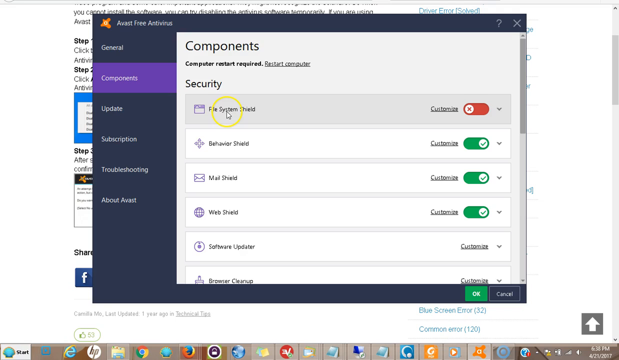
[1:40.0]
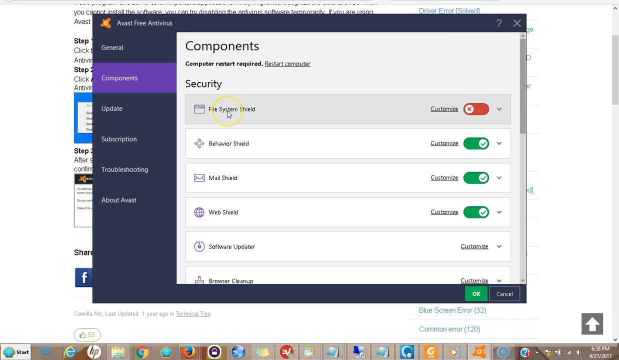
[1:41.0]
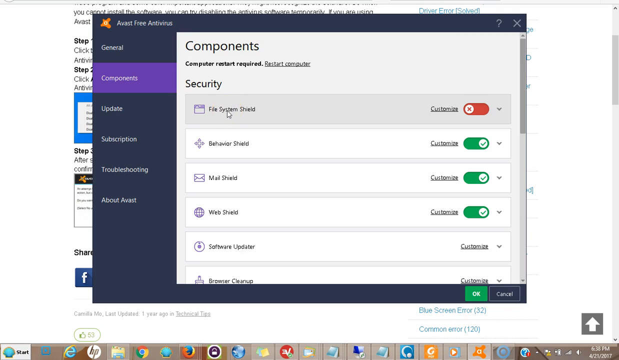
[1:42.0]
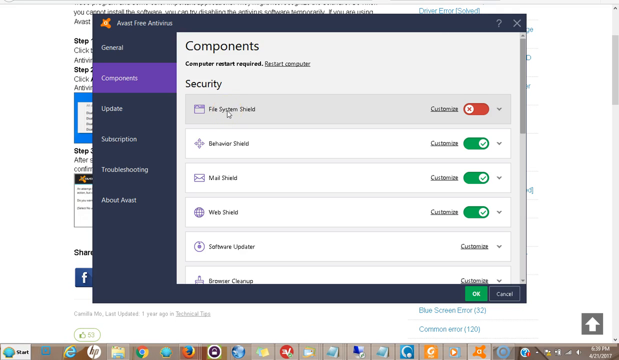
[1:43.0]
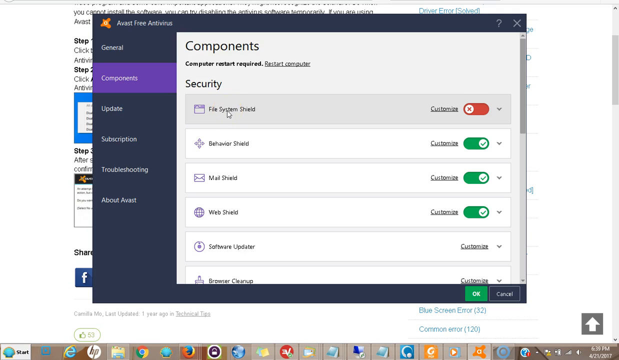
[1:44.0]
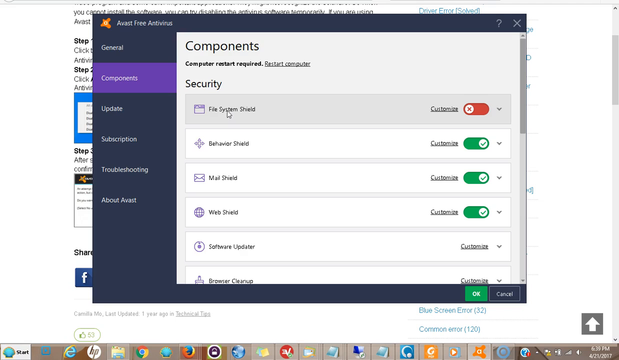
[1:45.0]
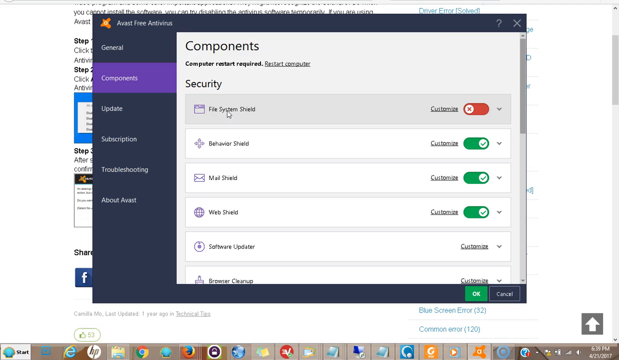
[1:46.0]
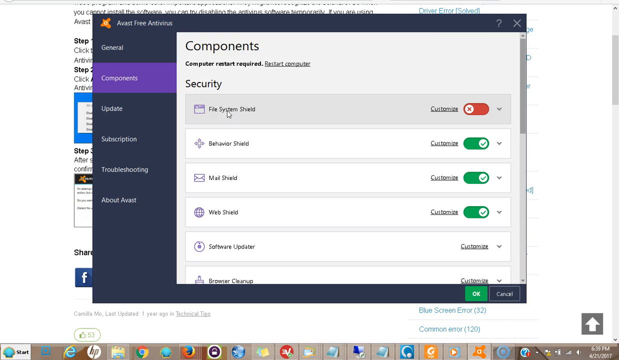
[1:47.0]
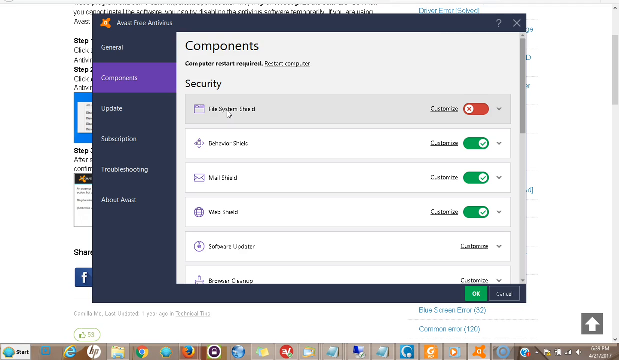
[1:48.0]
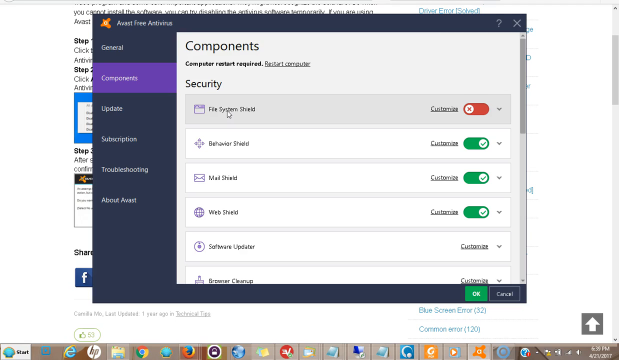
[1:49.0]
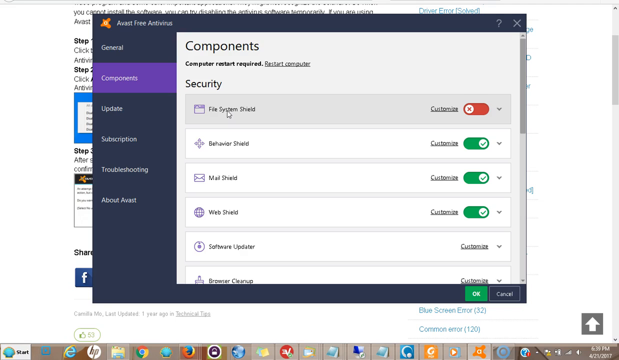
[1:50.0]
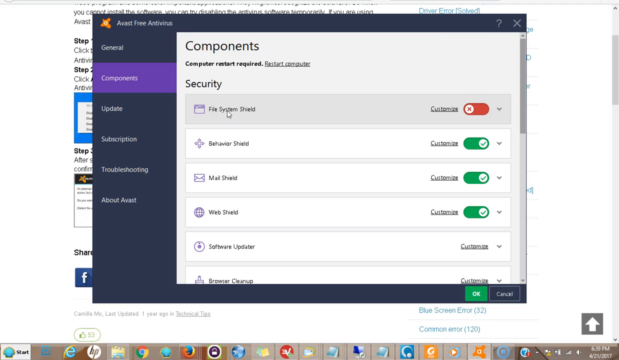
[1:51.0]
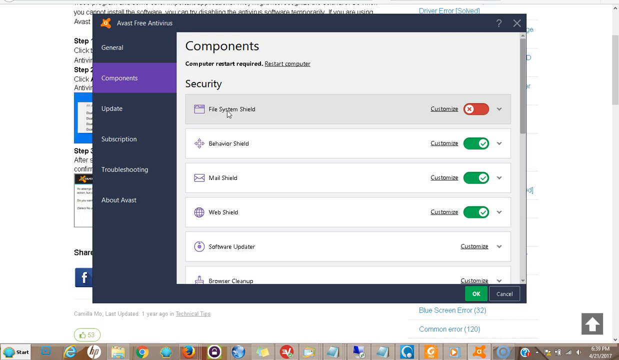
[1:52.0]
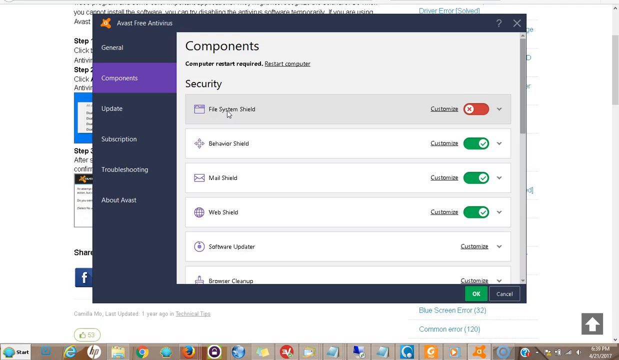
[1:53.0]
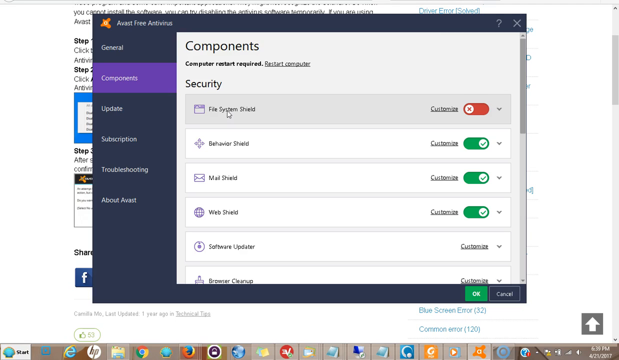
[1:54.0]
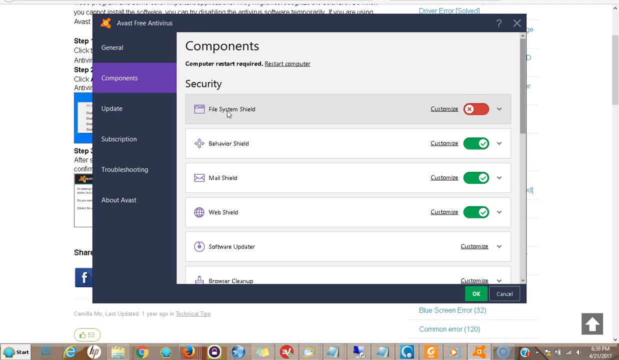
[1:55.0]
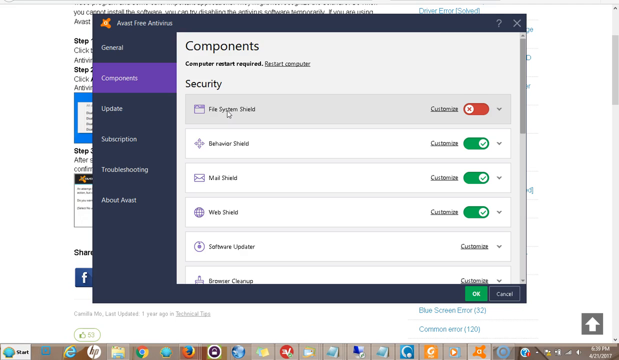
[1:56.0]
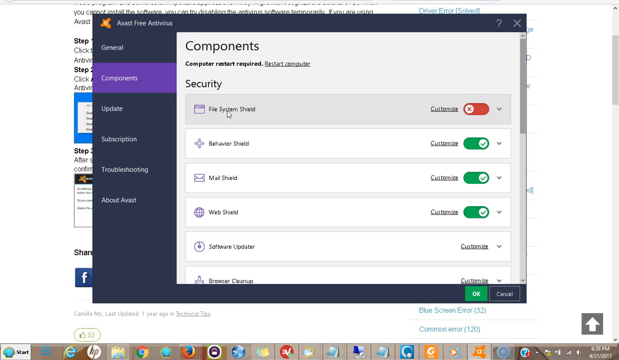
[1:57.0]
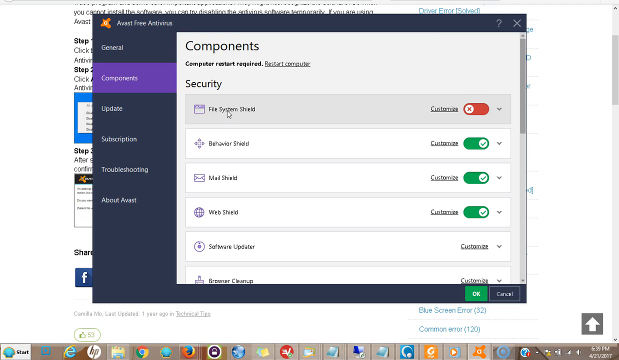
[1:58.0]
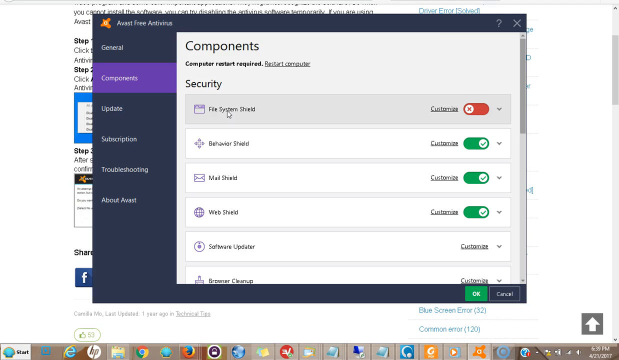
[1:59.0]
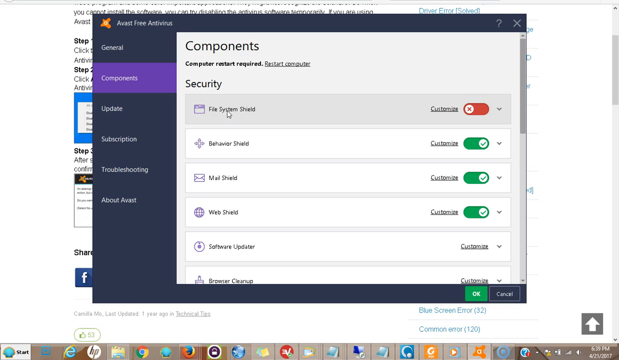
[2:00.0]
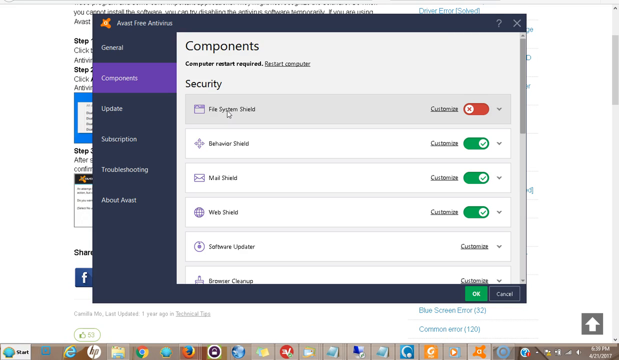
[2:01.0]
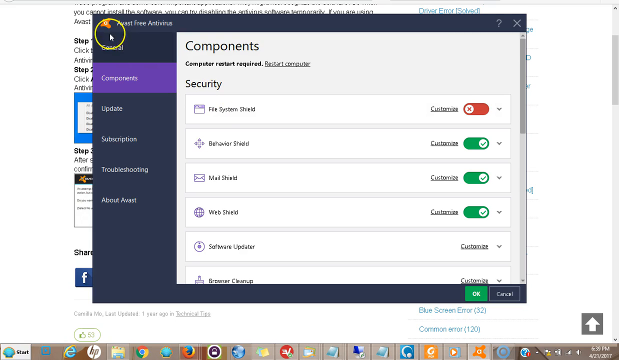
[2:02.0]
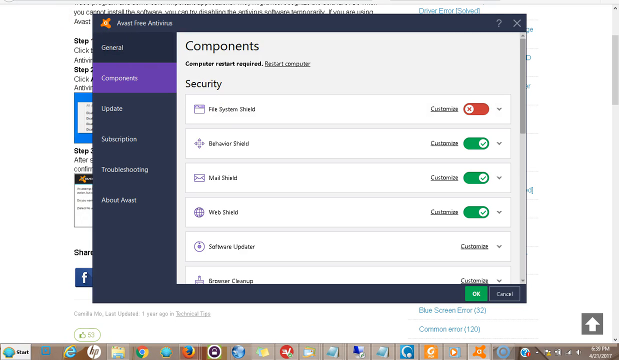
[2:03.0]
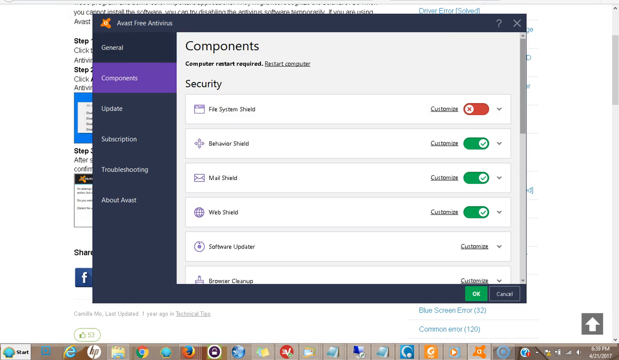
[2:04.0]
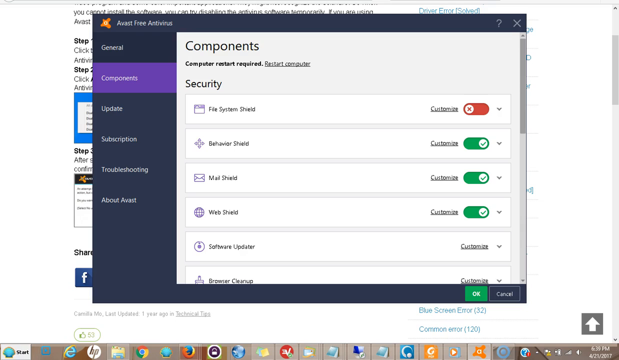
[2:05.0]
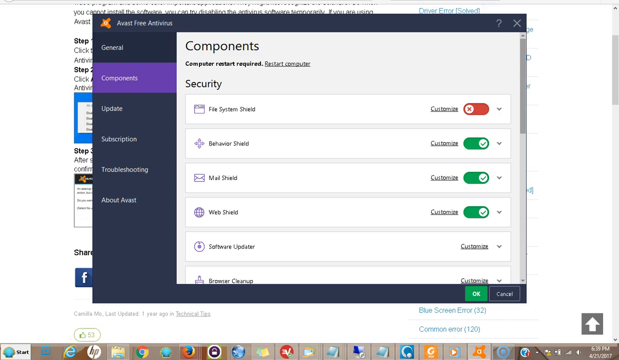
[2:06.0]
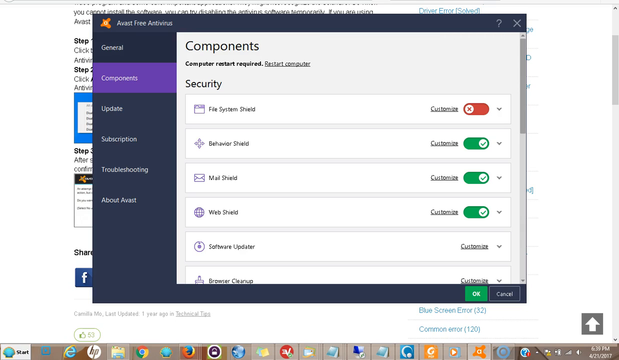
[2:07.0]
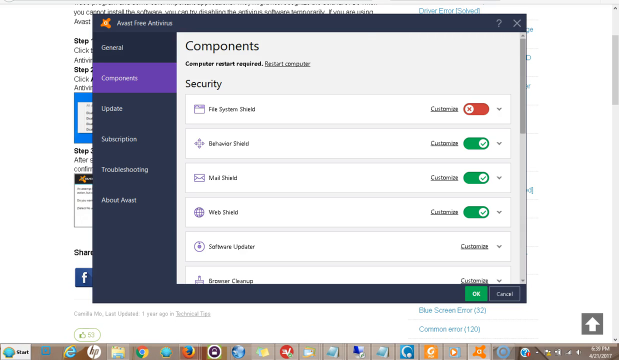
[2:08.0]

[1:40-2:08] The user's mouse rests over file system shield, specifically the word "system," and nothing else happens; the shield is not turned back on. At the very end the mouse scrolls up and moves to the left. Behind the Avast window is a webpage, mostly covered up, showing steps one, two and three. A share option with the Facebook logo appears to the left of upgrade and settings. At the bottom is what seems to be a website called Camilla MO, last updated one year ago, or possibly that is the author. A check or thumbs-up button shows that 53 people have given the article a thumbs up. On the right are a blue screen error with 32 and a common error with 120.